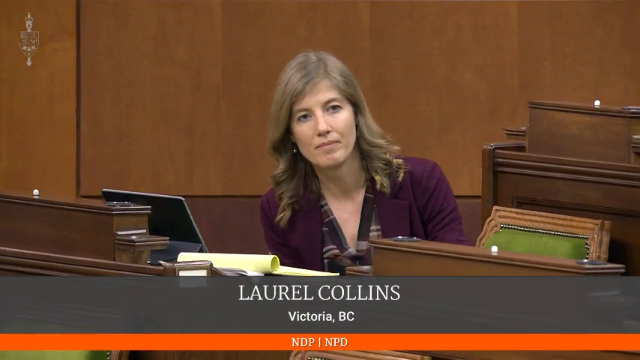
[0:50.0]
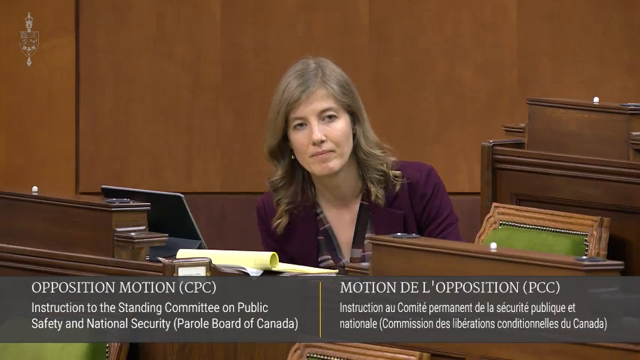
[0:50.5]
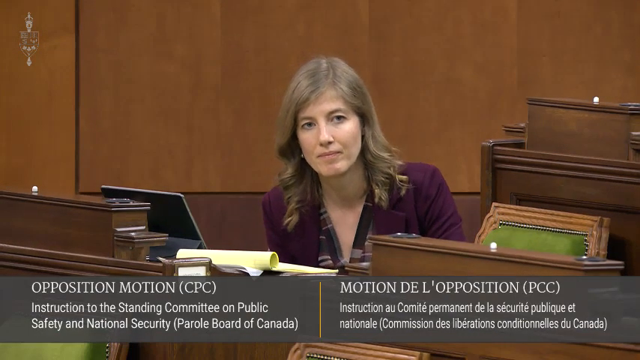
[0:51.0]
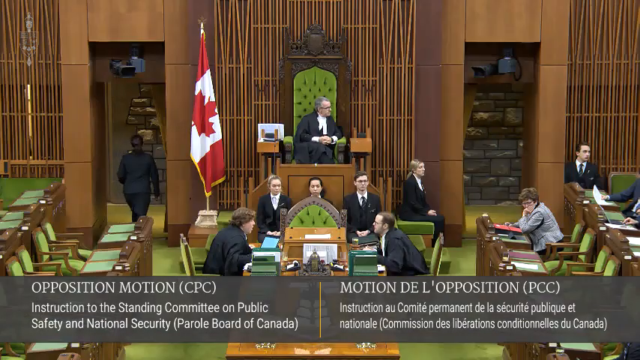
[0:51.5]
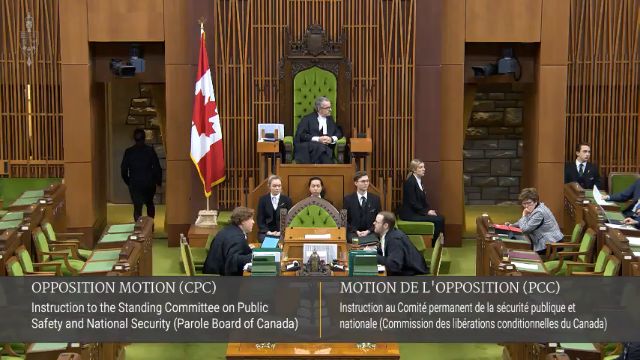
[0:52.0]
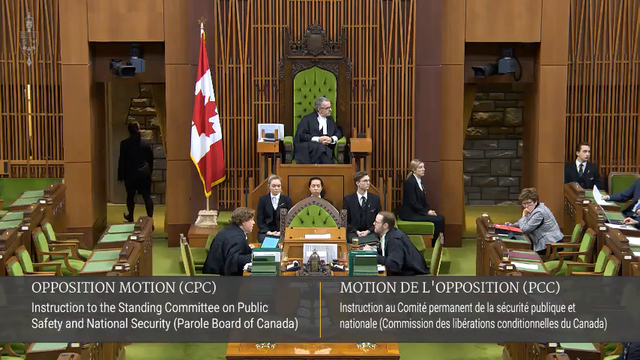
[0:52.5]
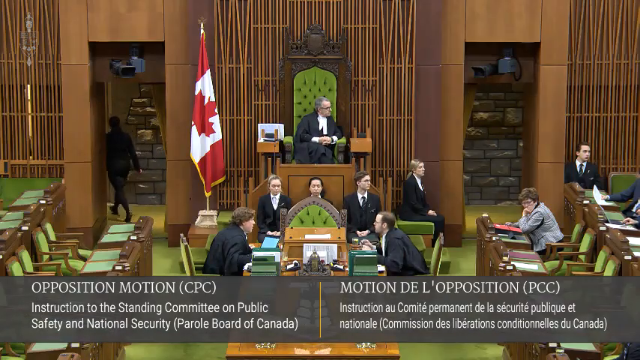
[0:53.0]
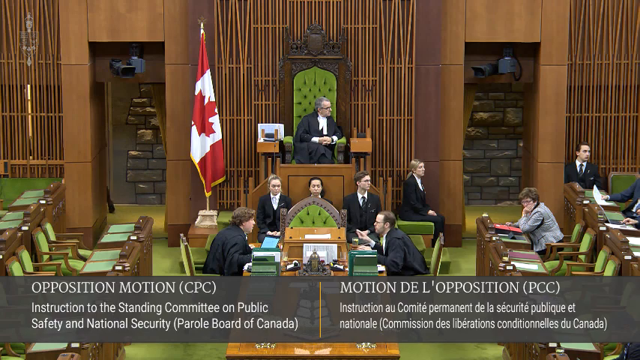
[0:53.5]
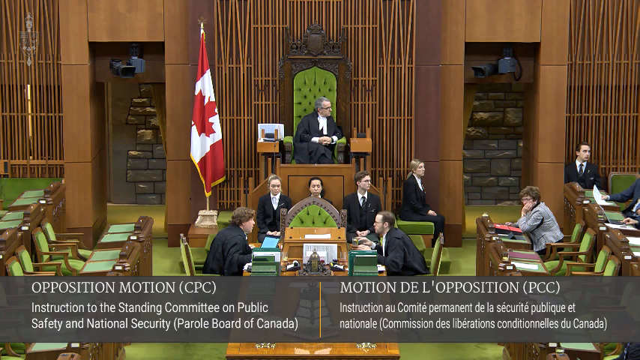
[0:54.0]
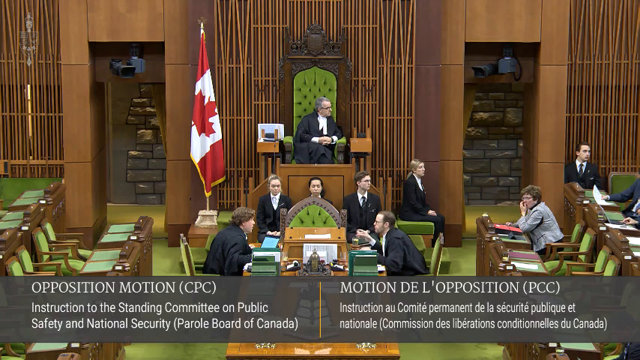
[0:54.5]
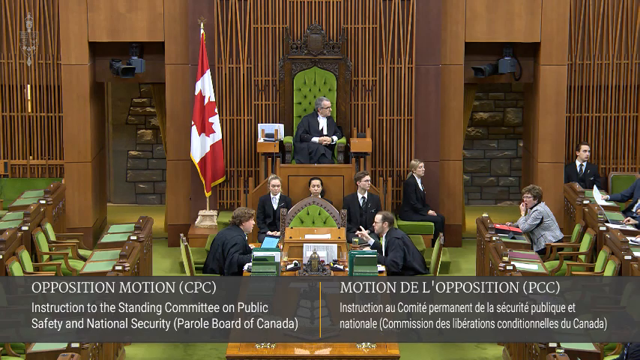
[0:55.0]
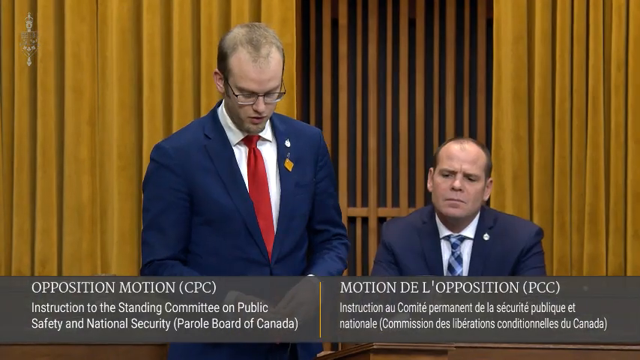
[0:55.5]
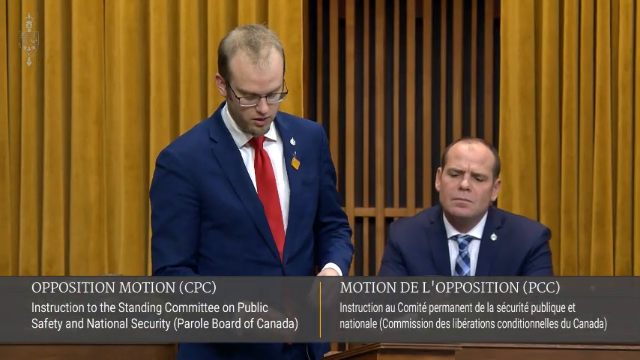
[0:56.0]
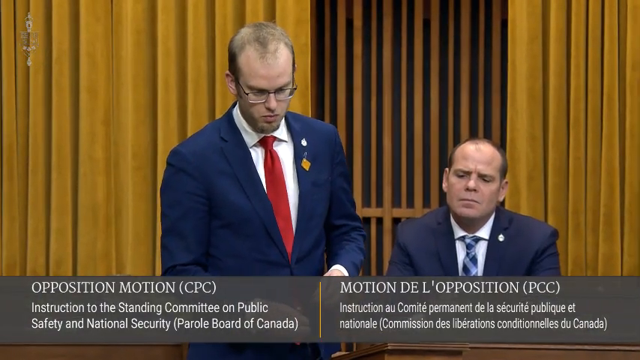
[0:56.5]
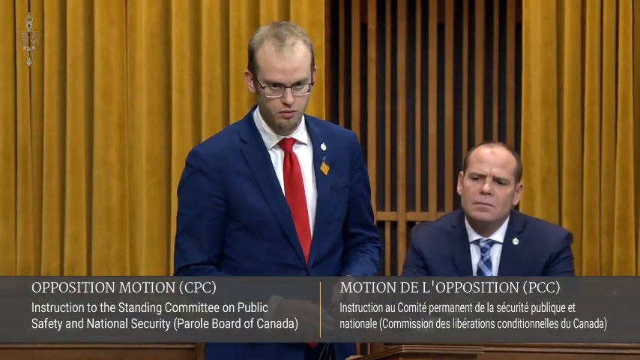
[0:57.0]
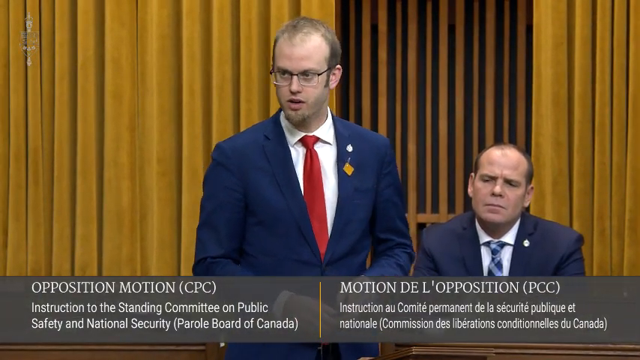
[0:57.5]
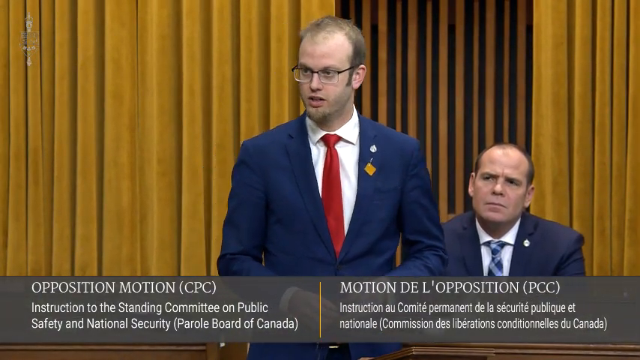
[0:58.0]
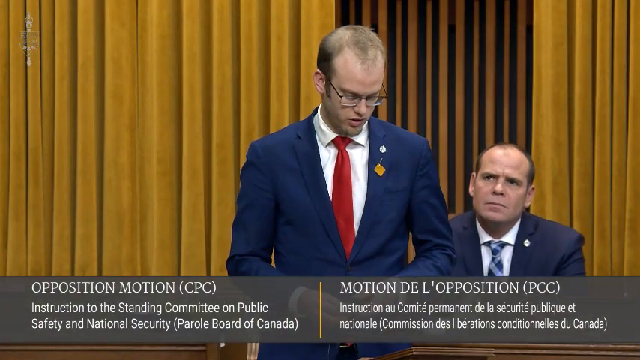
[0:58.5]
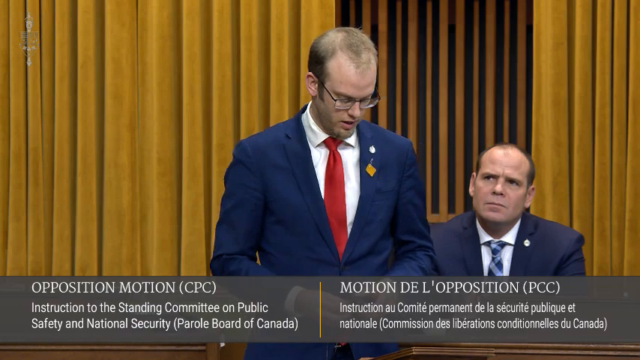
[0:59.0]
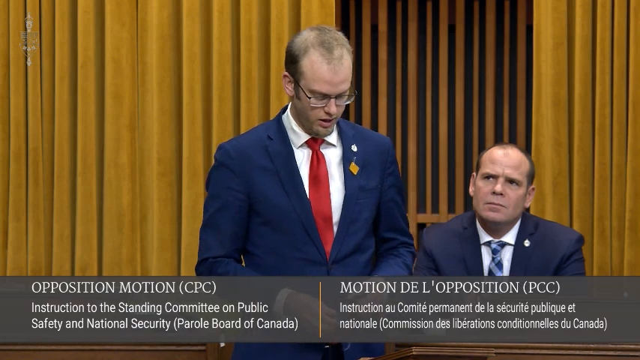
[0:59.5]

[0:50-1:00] The video transitions to an overview of the courtroom. A judge is sitting in a brown wooden chair with green upholstery, in front of a room that is completely brown with green upholstery. A Canadian flag is on his left side, and on his right side someone wearing a black suit is sitting and looking straight ahead. Various people are sitting at different desks, all in professional attire, and one person walks out of the room to the left. The scene then transitions to two men. One is standing up and speaking, wearing a blue suit with a white undershirt and a red tie. The other, a Caucasian man in a blue suit with a white undershirt and a blue patterned tie, is looking up at the man who is talking.